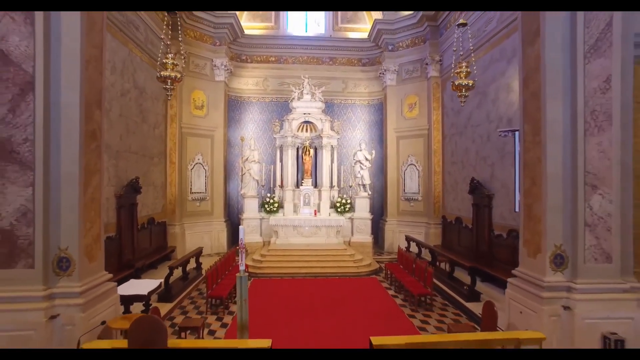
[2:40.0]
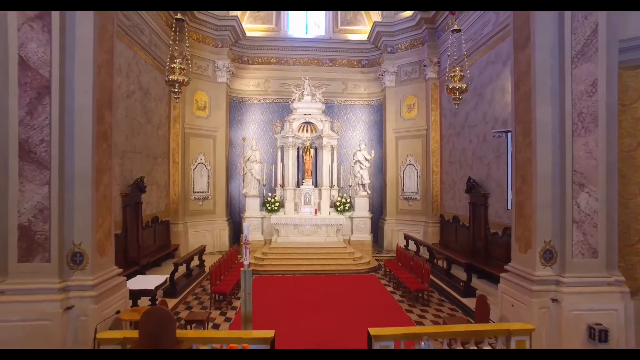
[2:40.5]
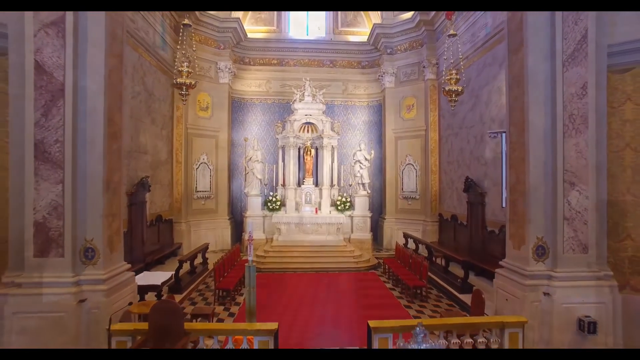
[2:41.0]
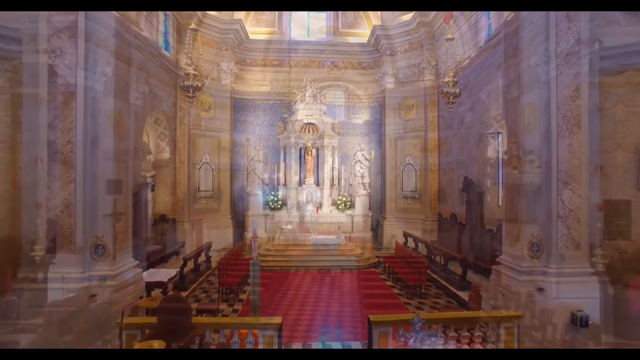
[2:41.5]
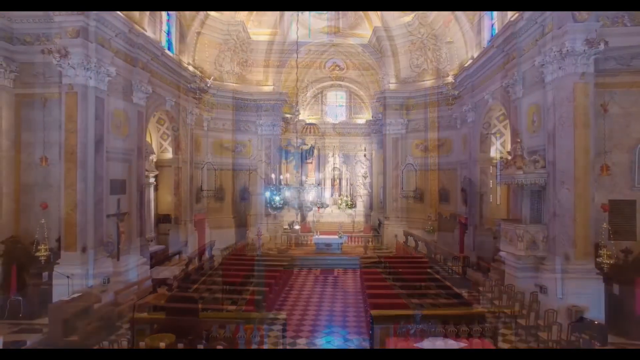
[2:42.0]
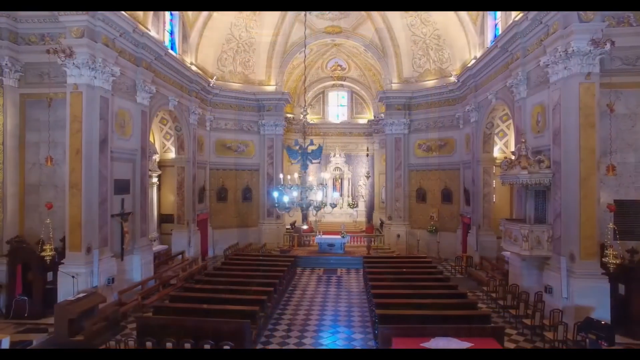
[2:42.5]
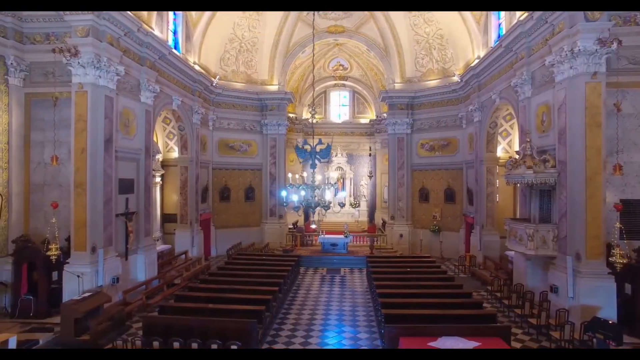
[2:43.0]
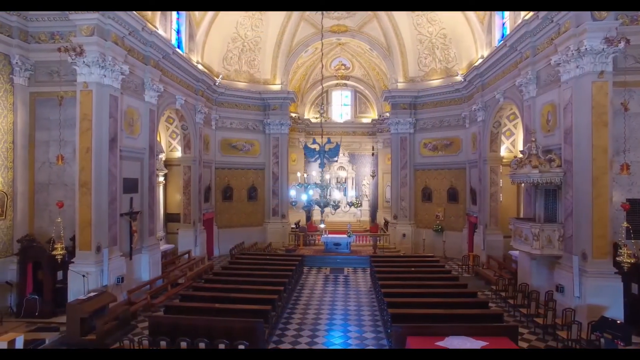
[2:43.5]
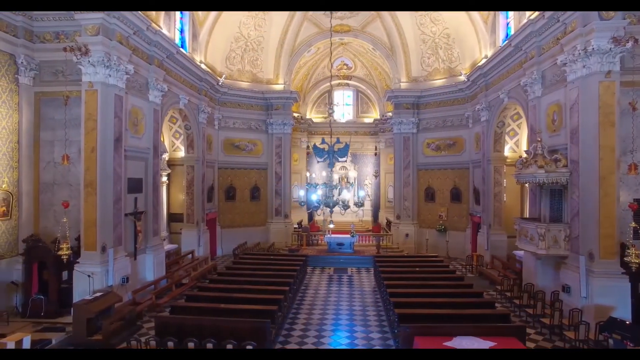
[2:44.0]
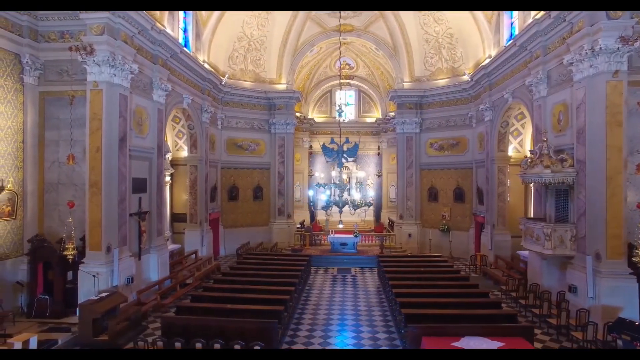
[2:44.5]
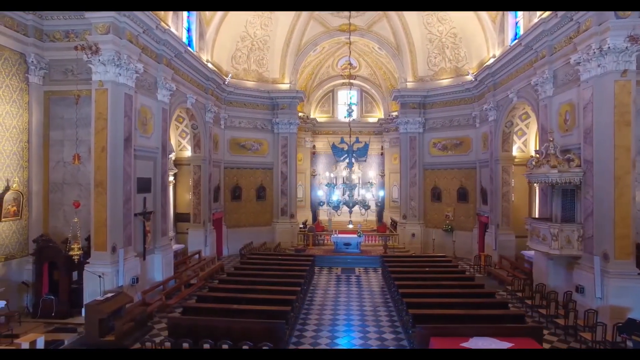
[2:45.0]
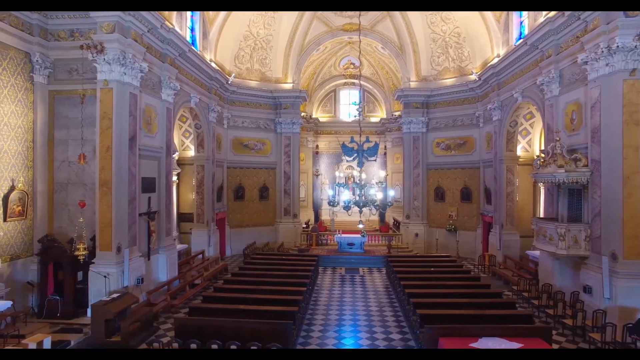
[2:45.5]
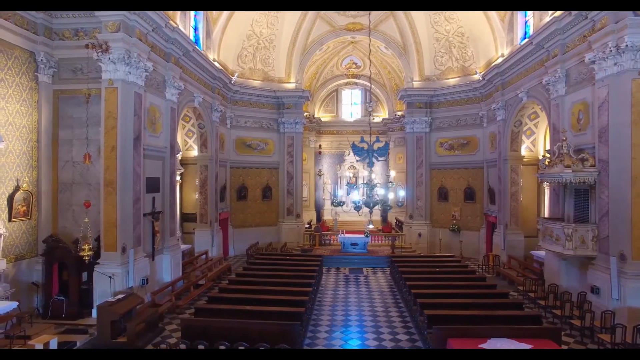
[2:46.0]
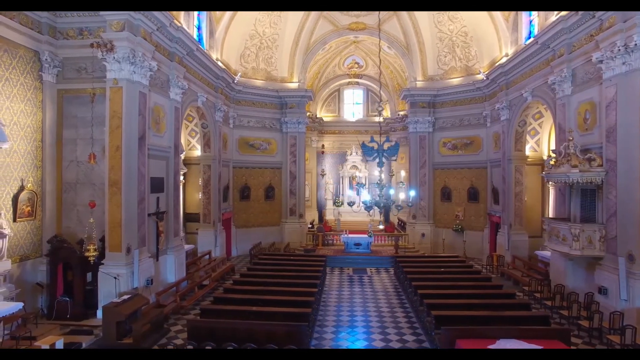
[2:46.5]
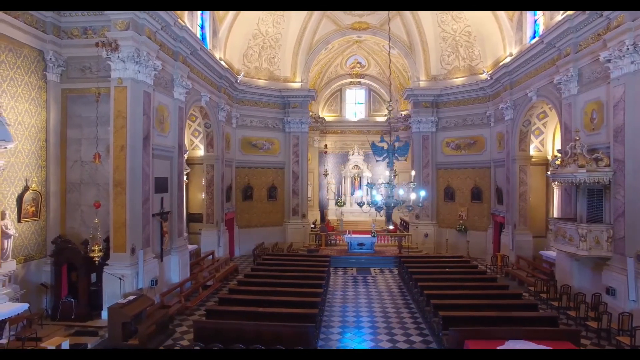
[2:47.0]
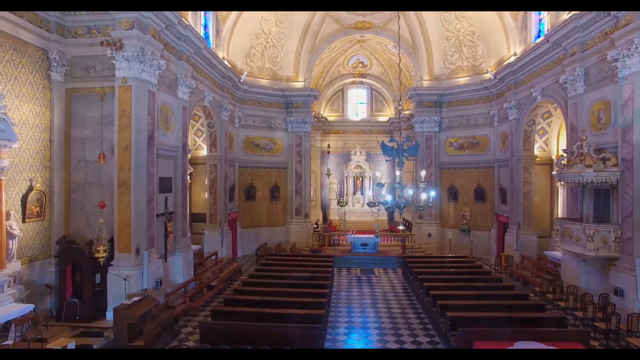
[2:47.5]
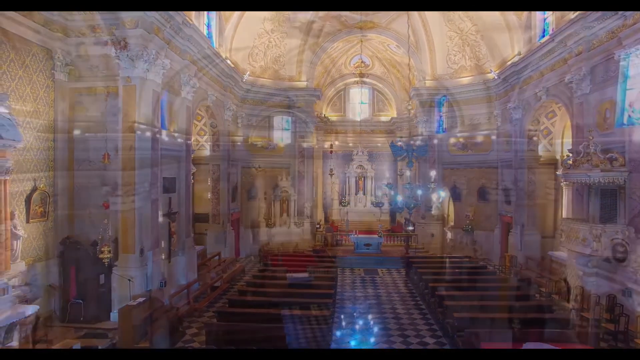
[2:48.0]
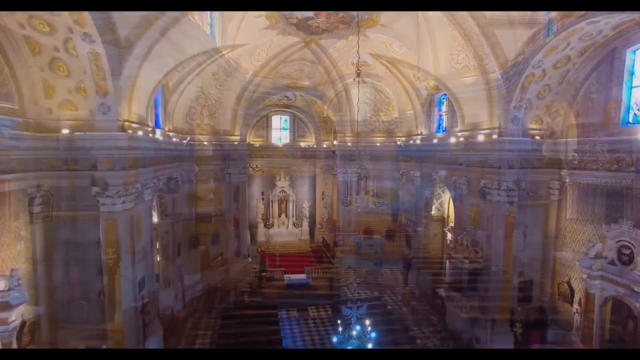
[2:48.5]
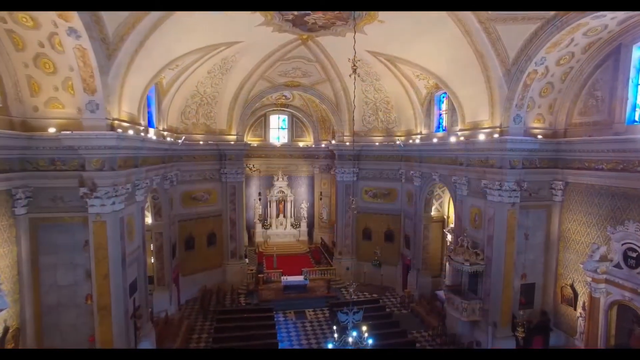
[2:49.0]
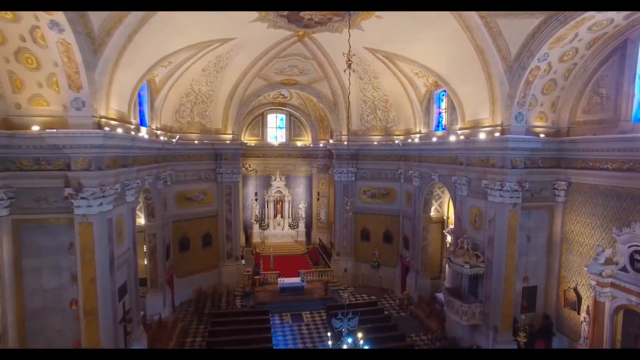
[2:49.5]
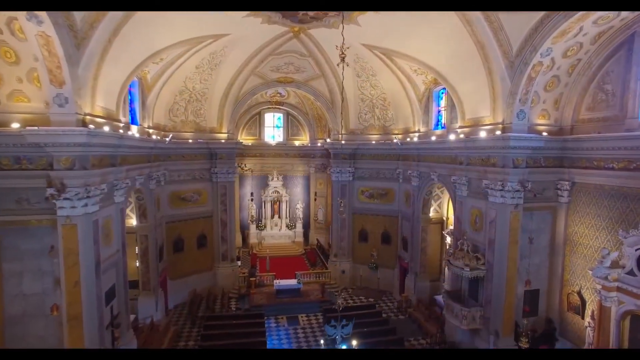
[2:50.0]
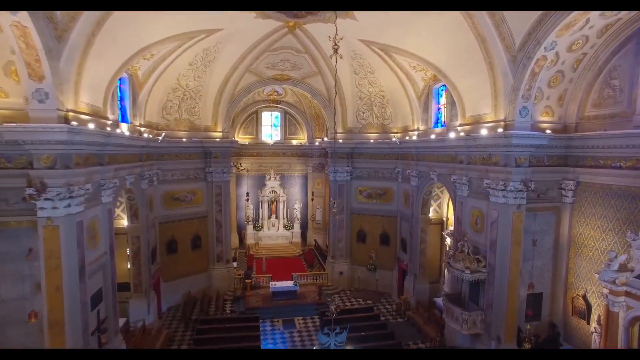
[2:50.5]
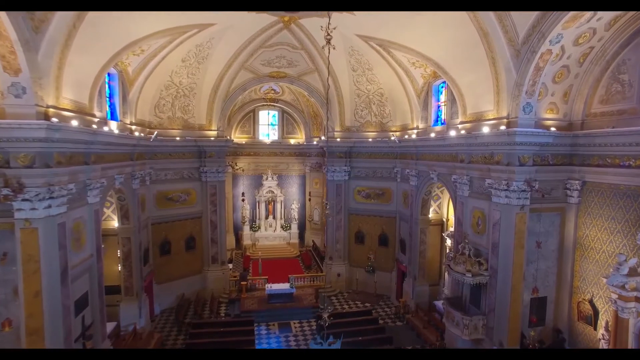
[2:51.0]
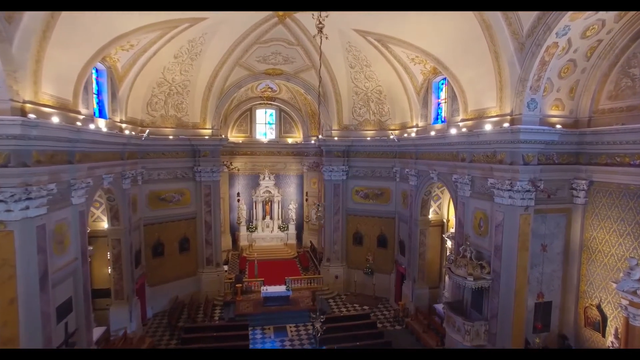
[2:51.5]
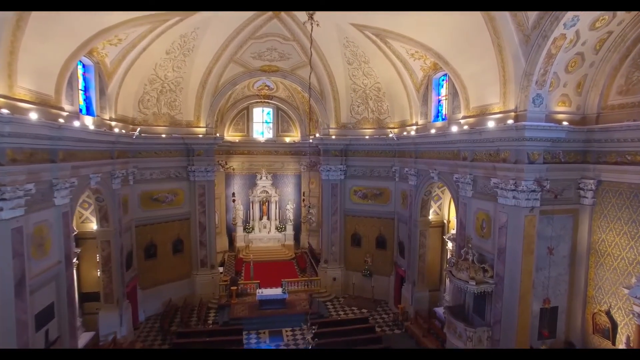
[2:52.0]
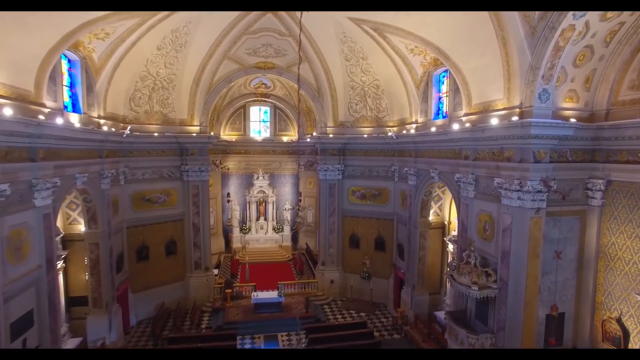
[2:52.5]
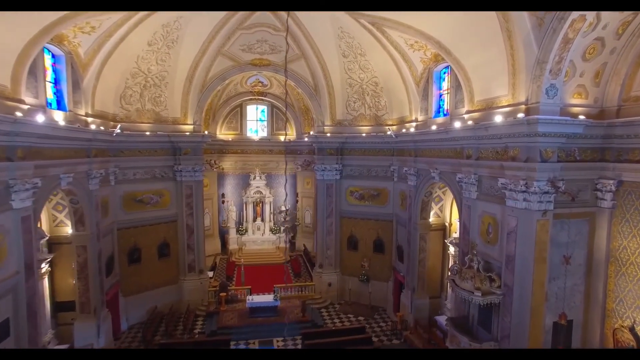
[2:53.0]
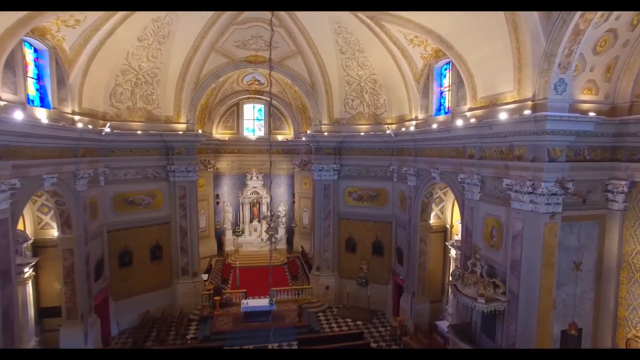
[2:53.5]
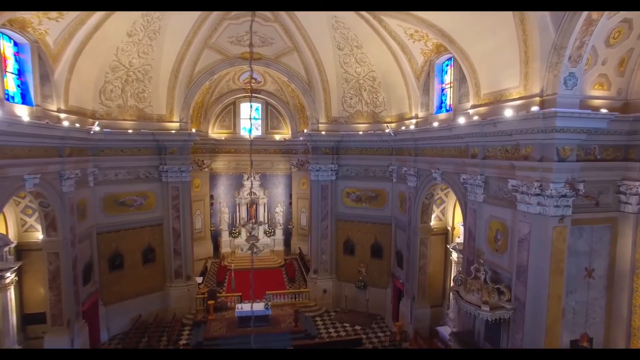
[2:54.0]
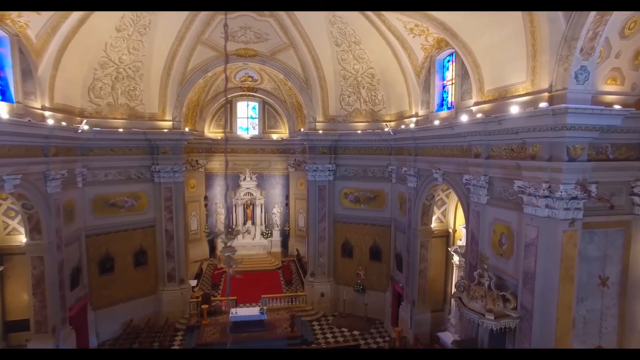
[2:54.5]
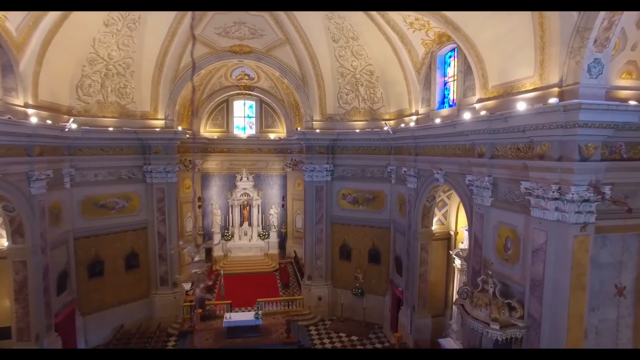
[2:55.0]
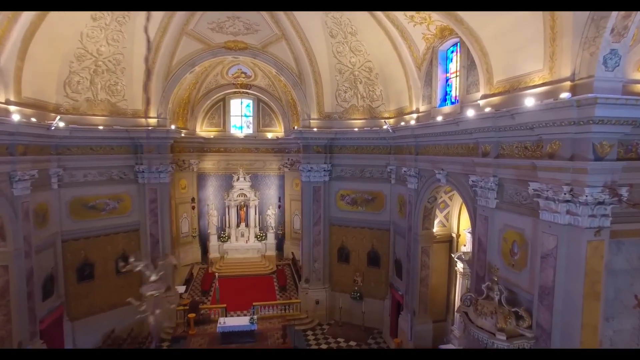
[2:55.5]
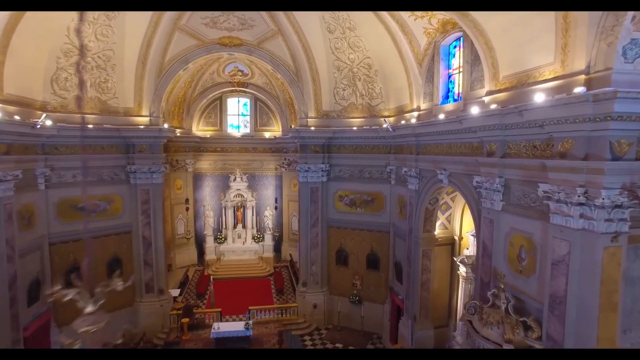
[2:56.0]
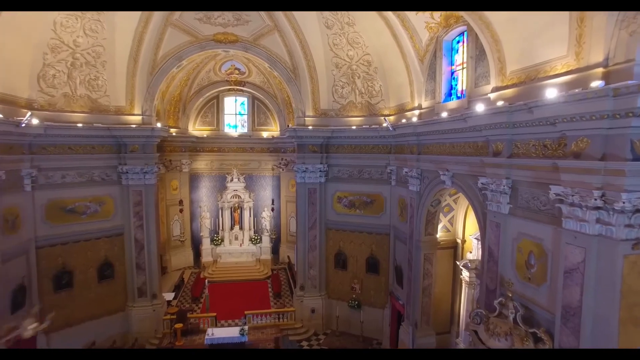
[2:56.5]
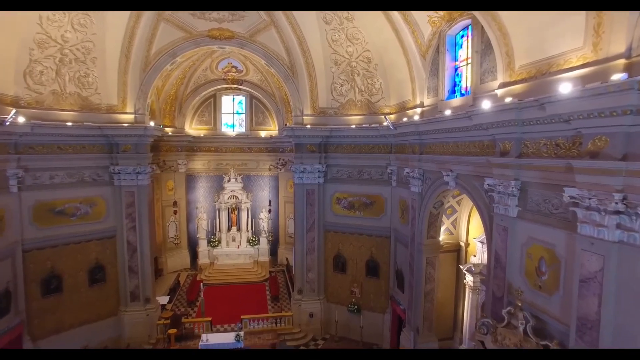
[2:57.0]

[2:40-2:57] The camera slows a little, then zooms backwards. A chandelier is briefly visible before the view moves to the ceiling, kind of zooming forward toward a buttress. After a very short shot, the view returns to the Virgin Mary in her alcove in the altarpiece at the rear, with a kind of blue decorated pattern on either side. The pews and various other features are visible as the camera keeps zooming around the church without settling on anything. The church has a continental feel and is possibly French.